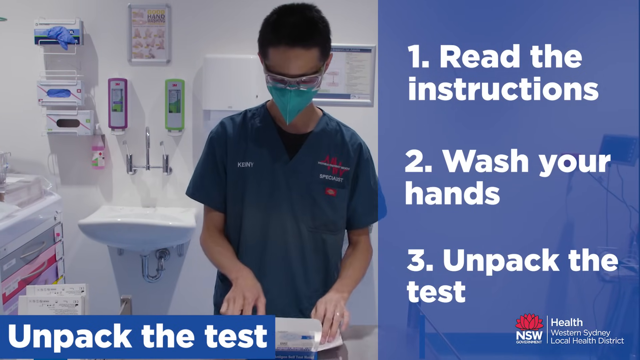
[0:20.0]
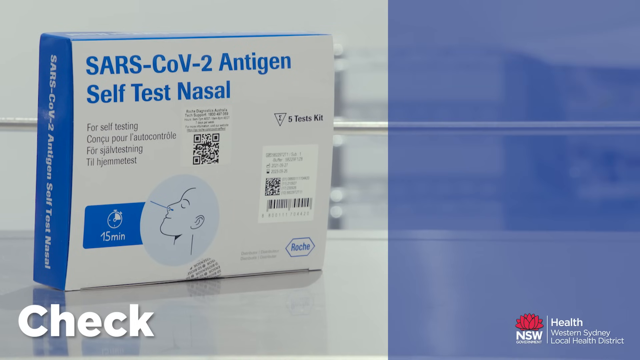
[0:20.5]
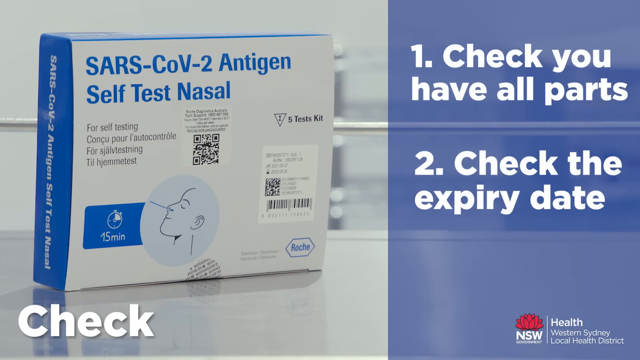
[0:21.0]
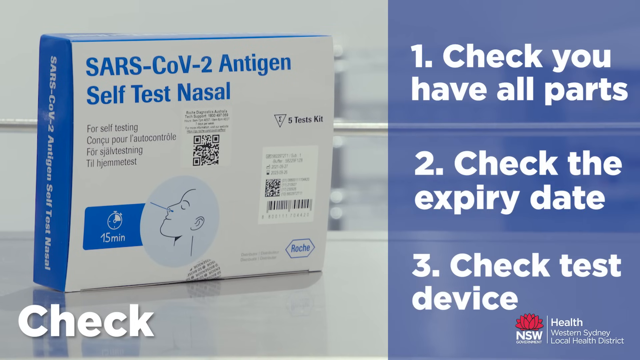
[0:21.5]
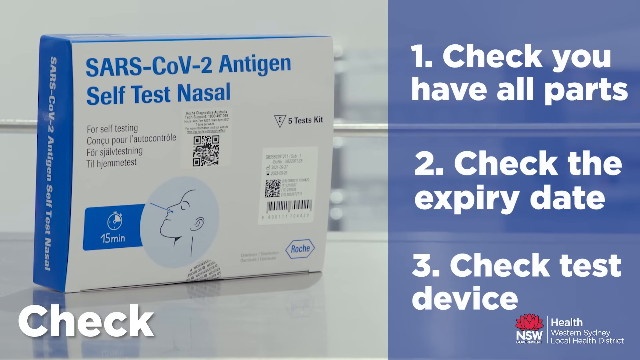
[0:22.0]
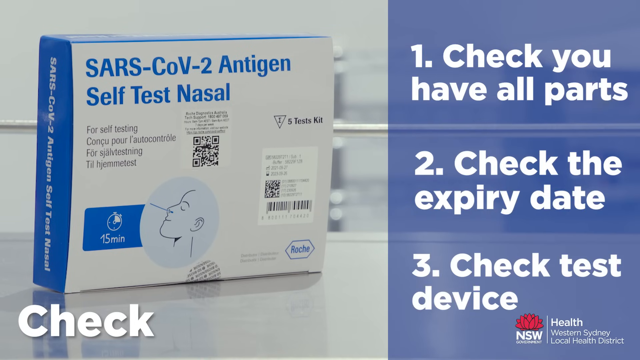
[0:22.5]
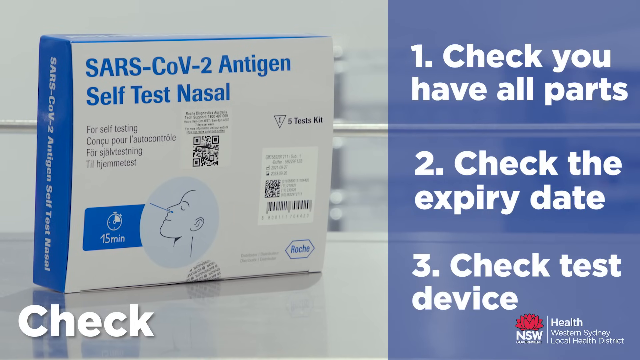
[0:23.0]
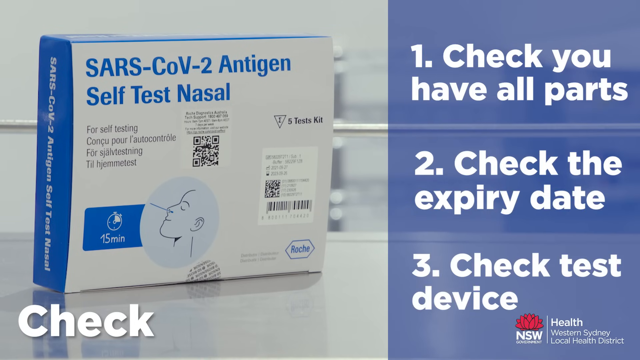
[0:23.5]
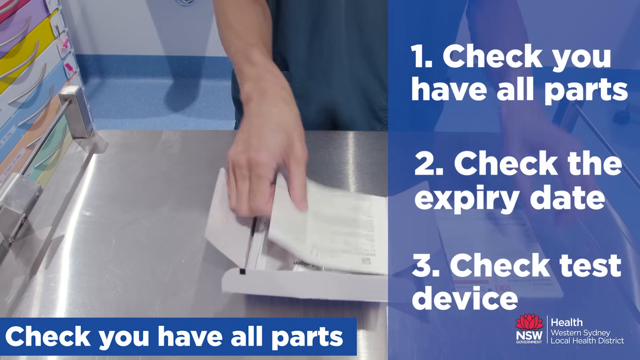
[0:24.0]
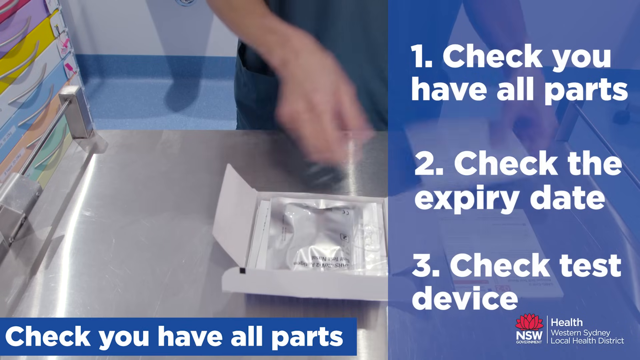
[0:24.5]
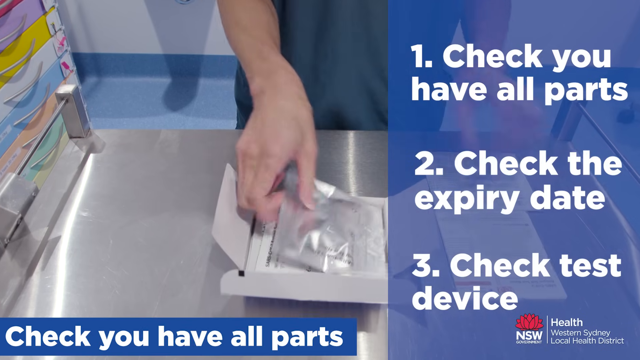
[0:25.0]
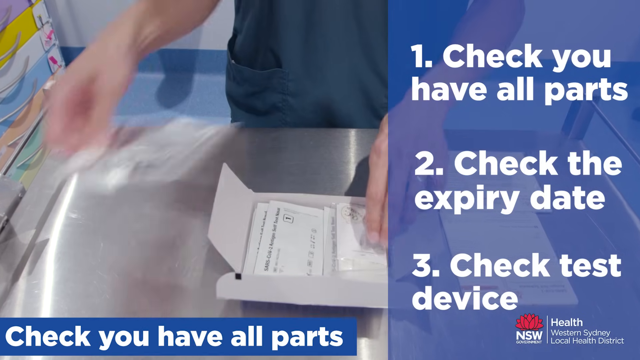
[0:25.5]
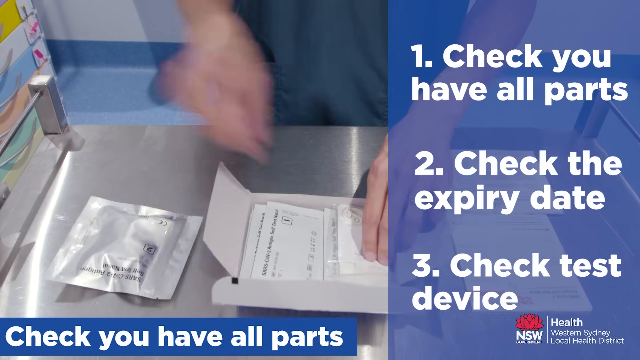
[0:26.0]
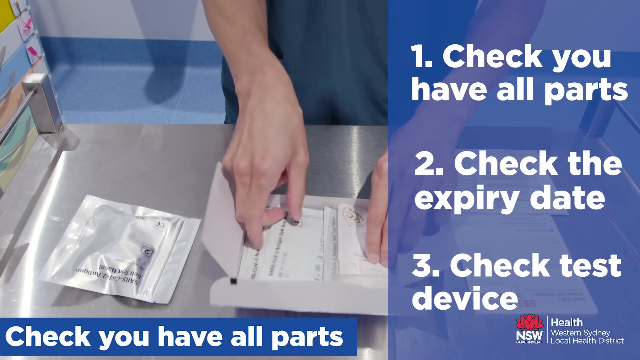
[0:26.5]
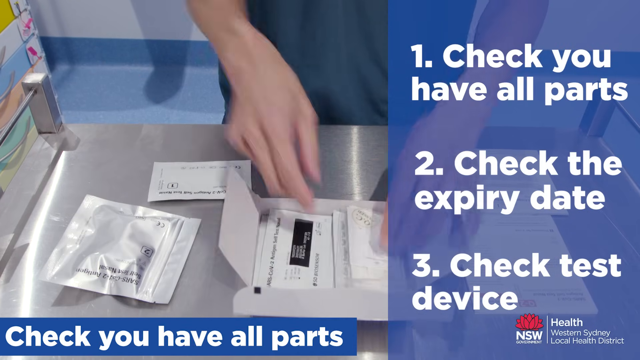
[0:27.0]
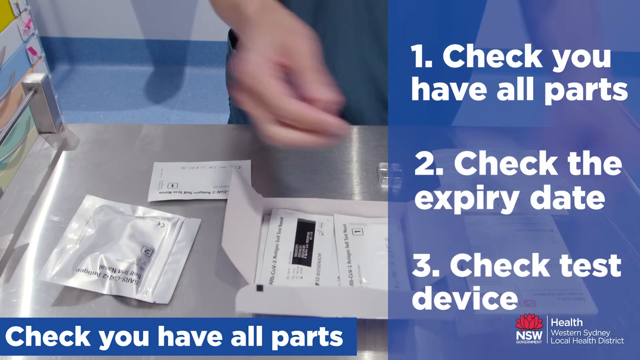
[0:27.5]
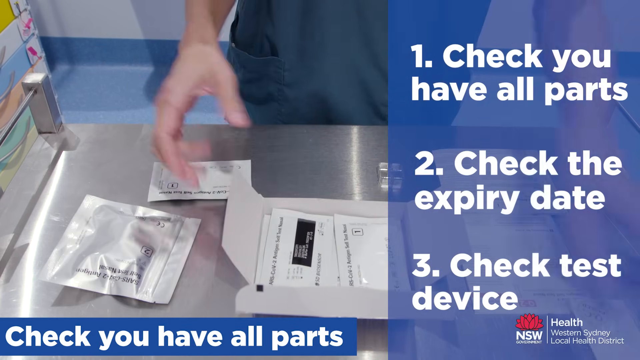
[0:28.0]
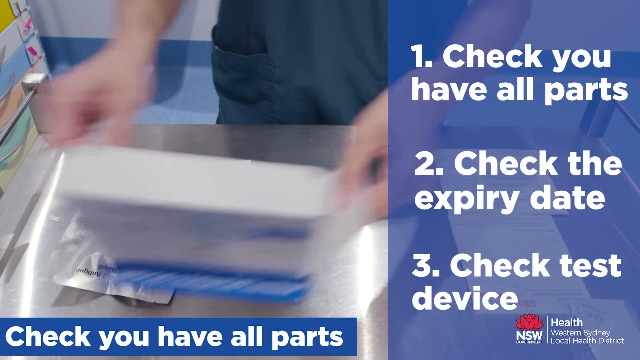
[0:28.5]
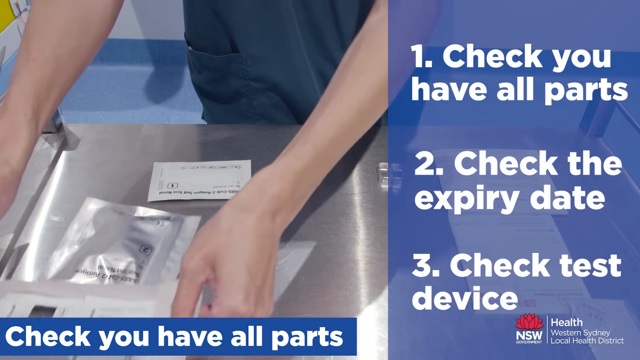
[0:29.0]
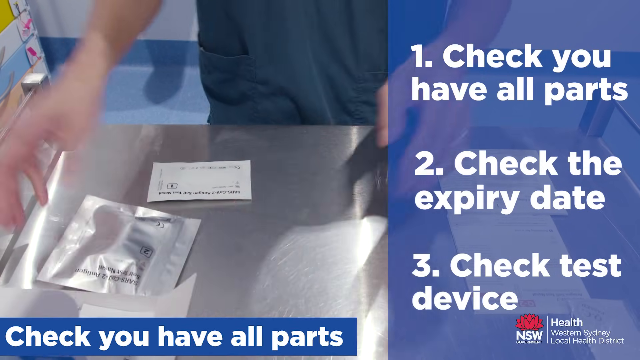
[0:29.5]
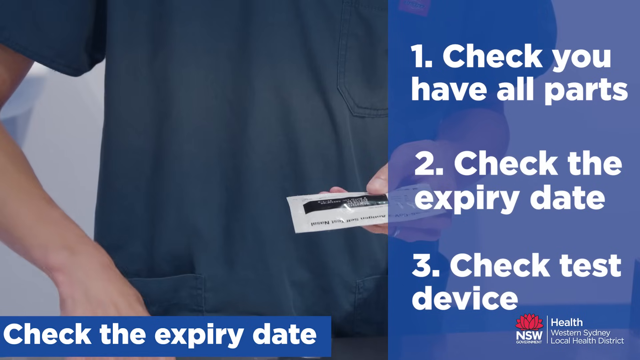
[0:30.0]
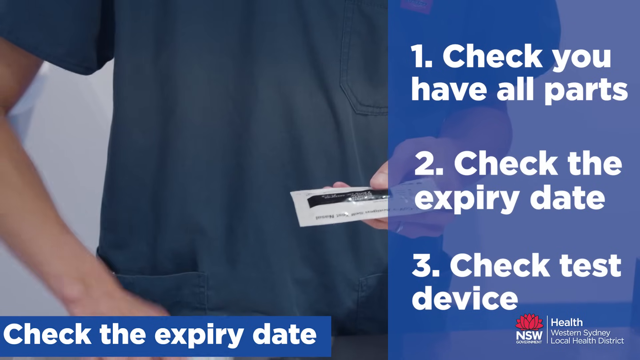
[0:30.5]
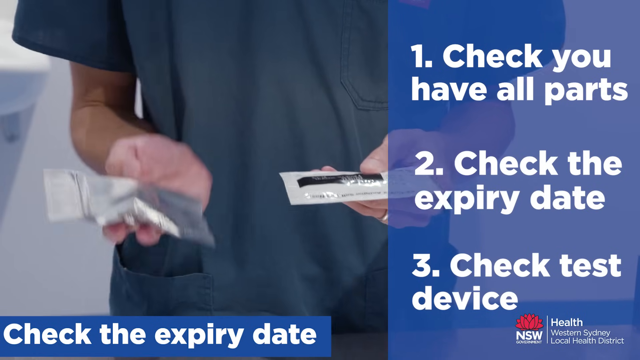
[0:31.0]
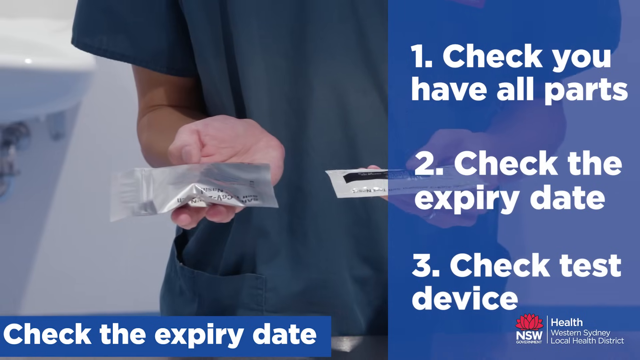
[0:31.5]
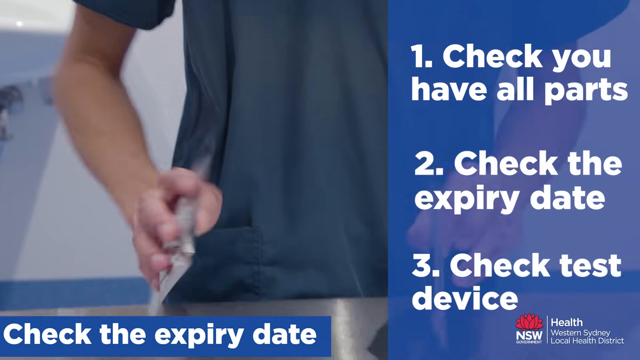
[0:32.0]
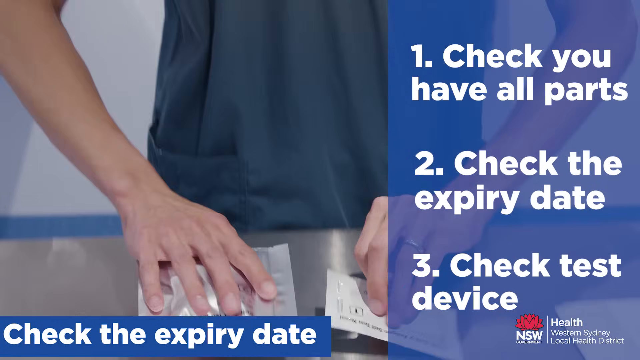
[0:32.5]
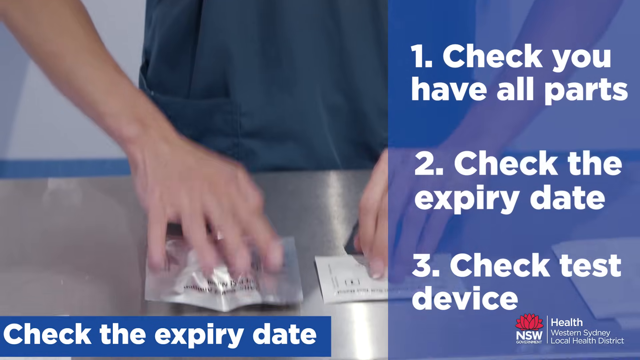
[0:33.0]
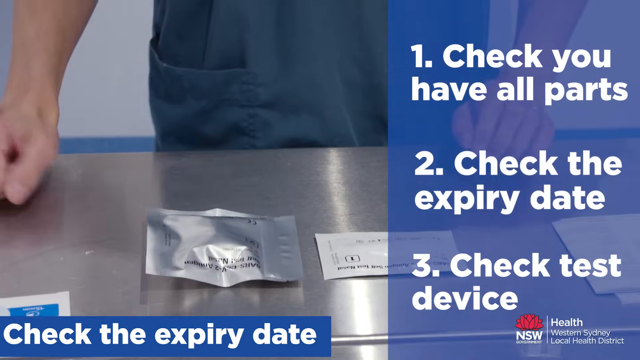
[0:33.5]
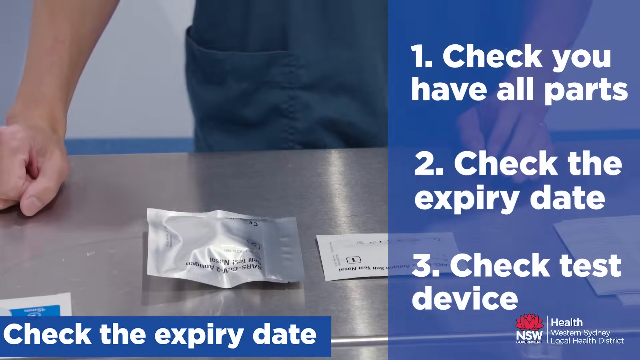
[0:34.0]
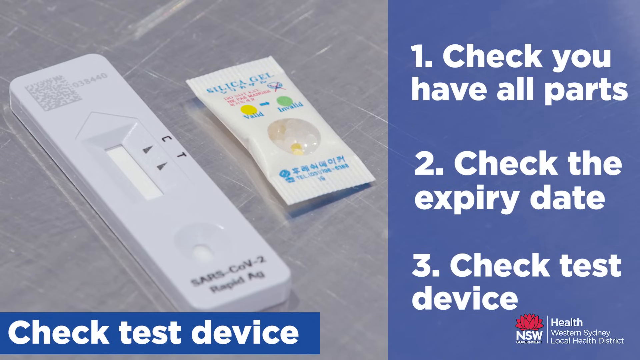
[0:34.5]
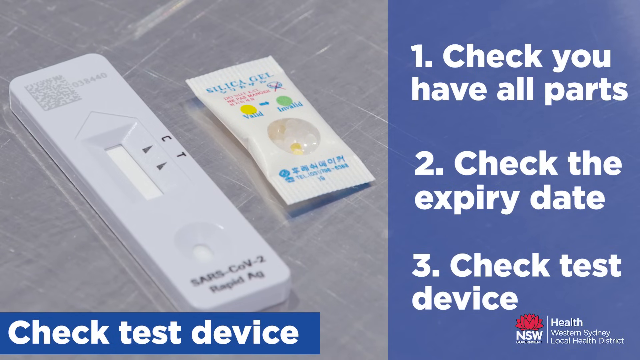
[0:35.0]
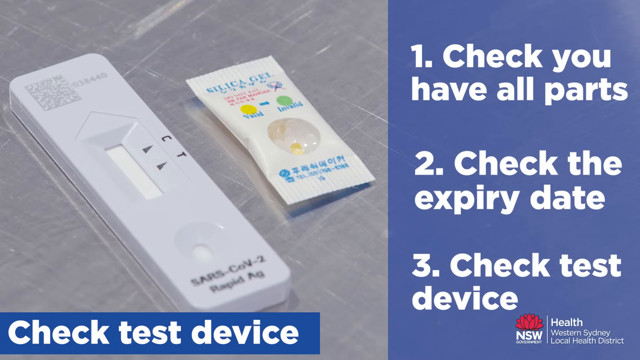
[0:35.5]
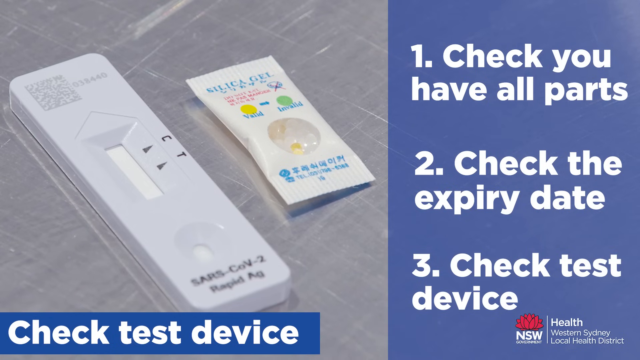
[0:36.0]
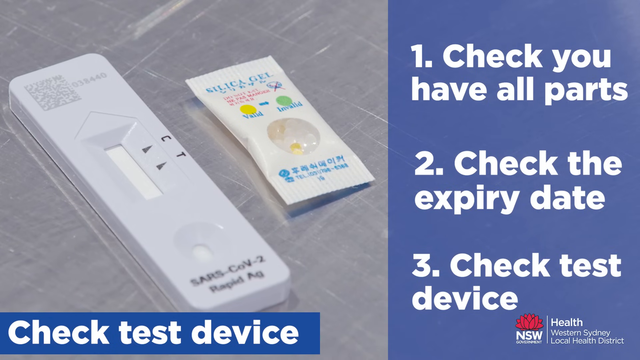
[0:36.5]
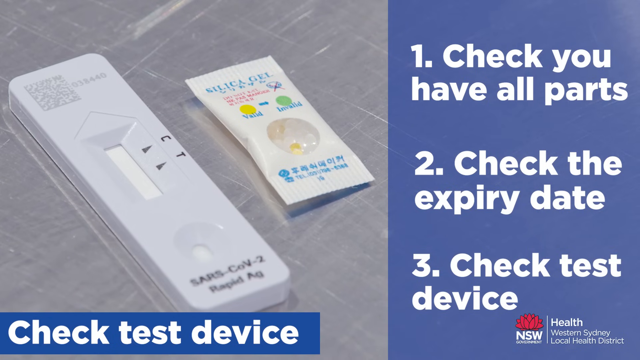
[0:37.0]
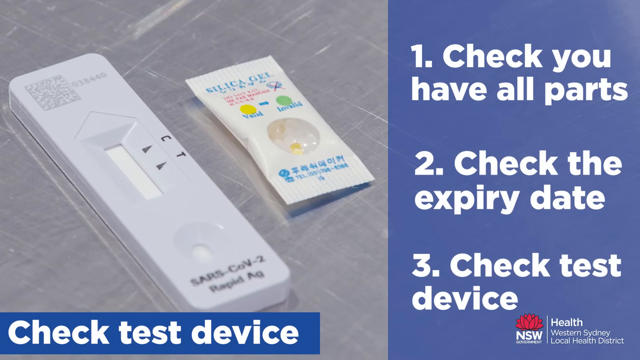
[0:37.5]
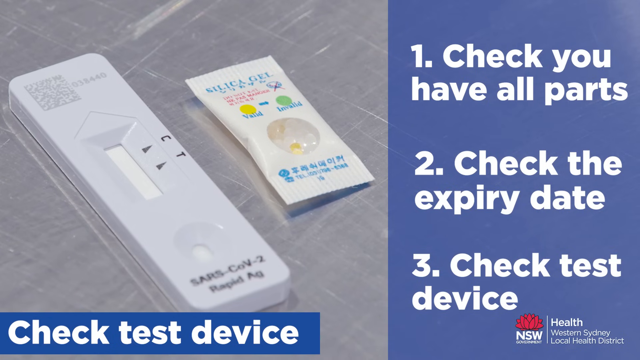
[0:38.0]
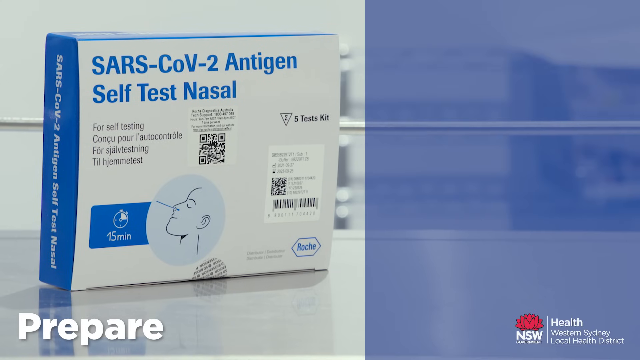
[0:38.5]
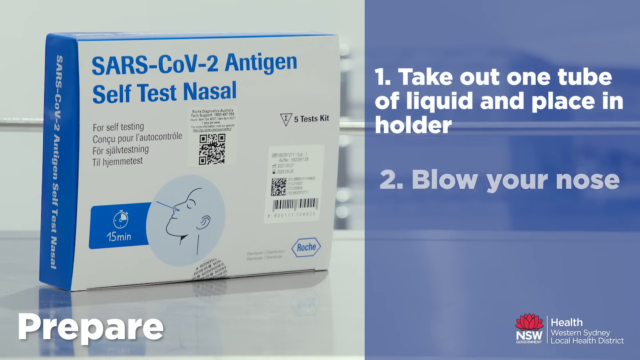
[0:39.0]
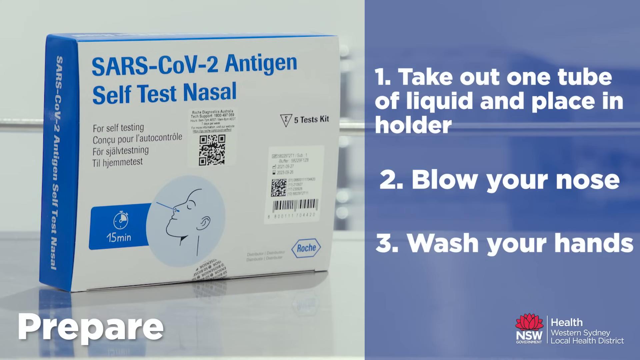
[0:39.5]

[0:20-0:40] A SARS test is shown in a box, and a person opens it up, takes out all of the parts and sets up the stand. Text reads "check that you have all the parts," "check the expiration date" and "check the test device." The person takes the various pieces of the test, all wrapped in plastic, out of the box and lays them on a metal table, then checks the expiration date and puts them down. Text then reads "take out one tube of liquid and place in holder. Blow your nose and wash your hands." The person wears dark greenish scrubs with a logo on the top, goggles and a blue face mask. The scrub top says "Kenny" and "specialist." The setting appears to be clinical, possibly in another country.